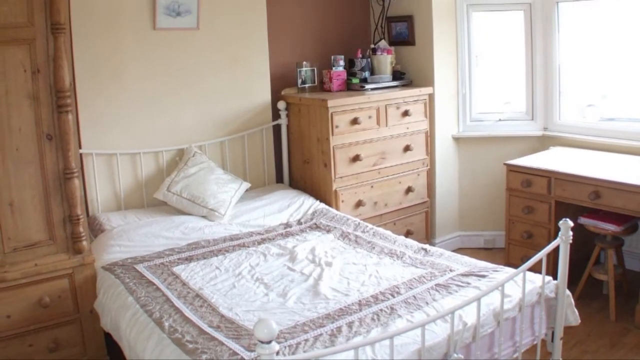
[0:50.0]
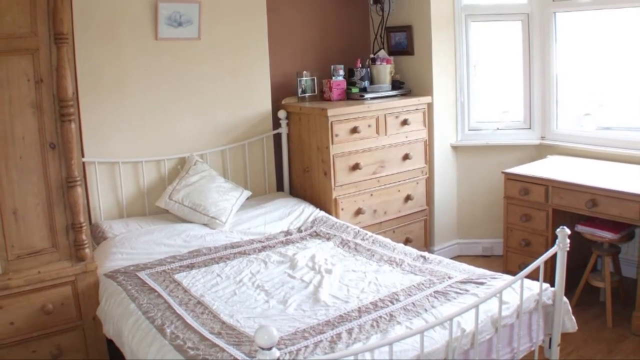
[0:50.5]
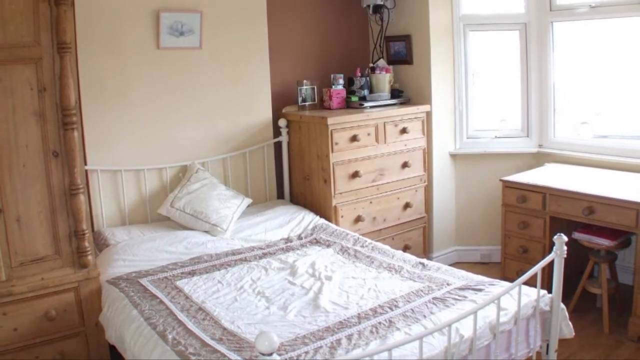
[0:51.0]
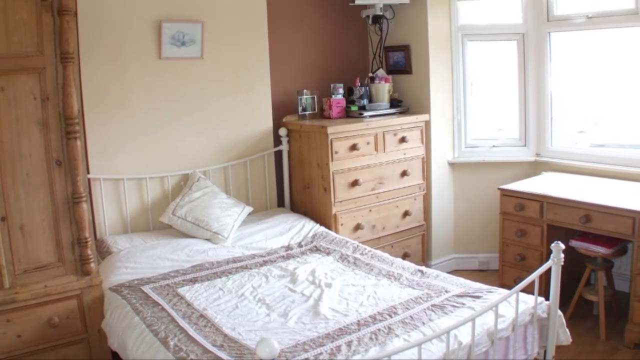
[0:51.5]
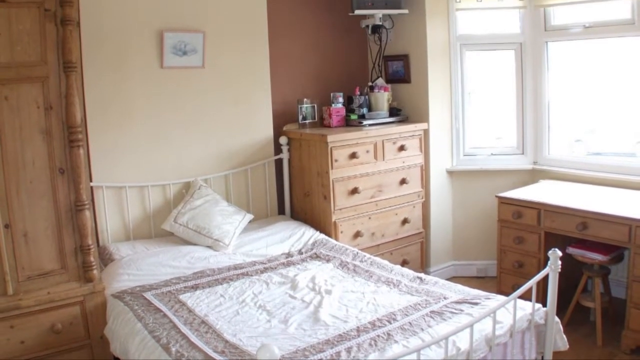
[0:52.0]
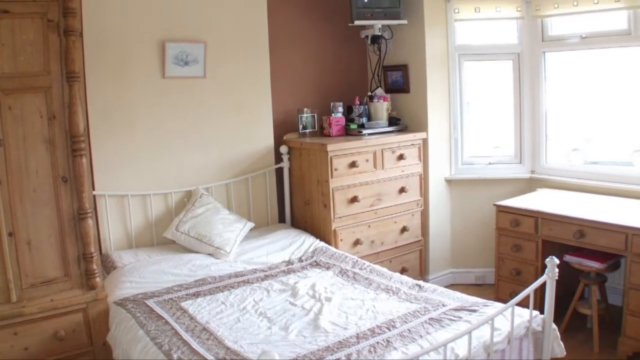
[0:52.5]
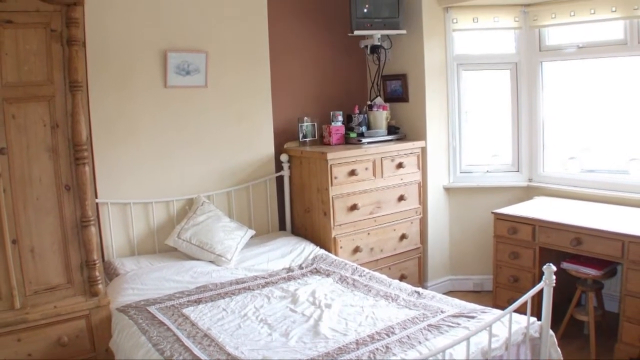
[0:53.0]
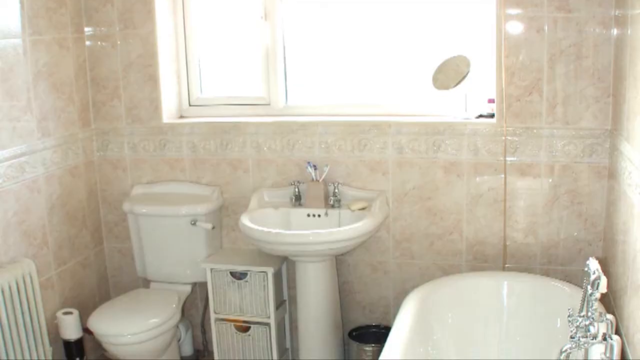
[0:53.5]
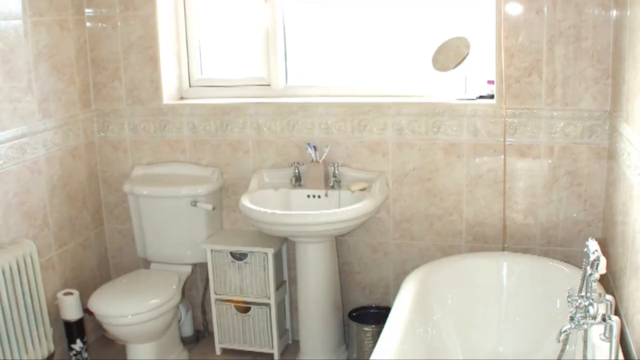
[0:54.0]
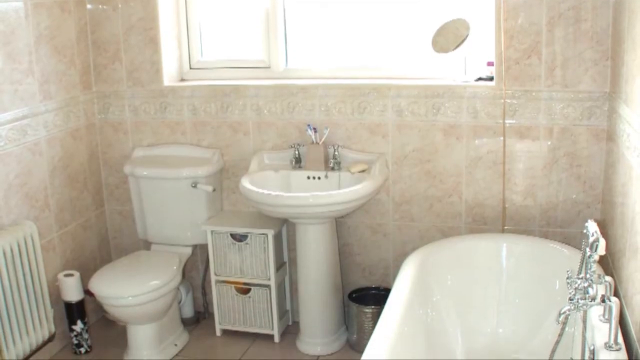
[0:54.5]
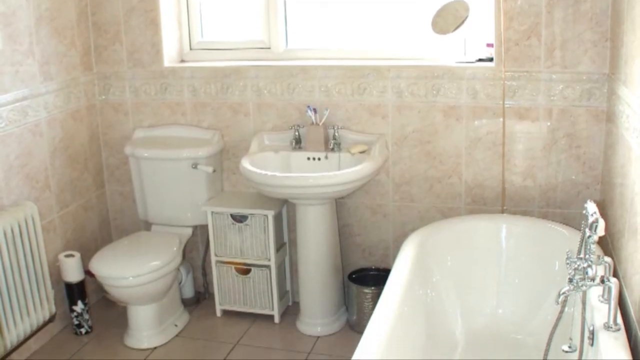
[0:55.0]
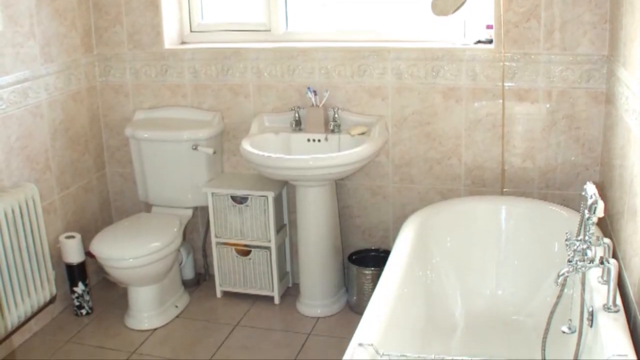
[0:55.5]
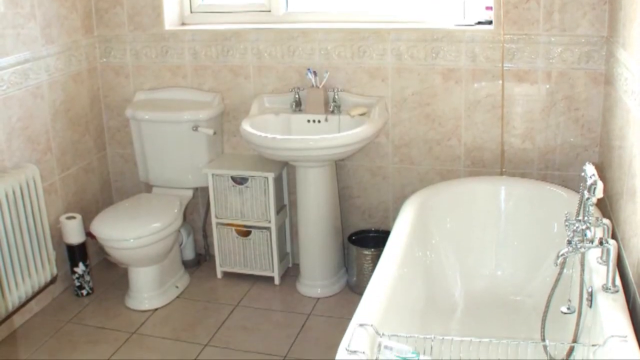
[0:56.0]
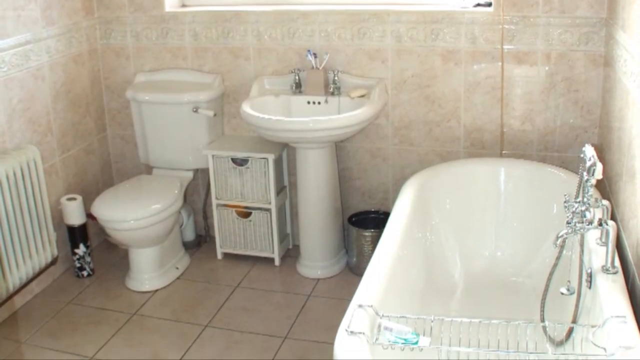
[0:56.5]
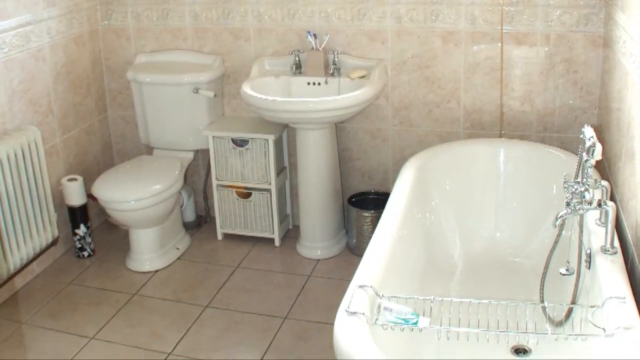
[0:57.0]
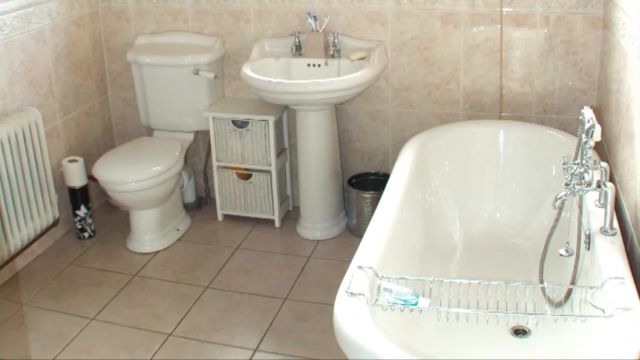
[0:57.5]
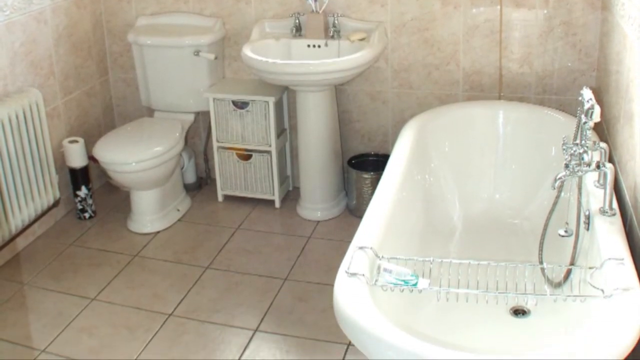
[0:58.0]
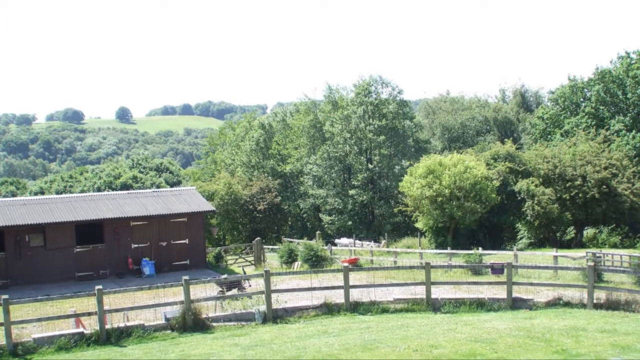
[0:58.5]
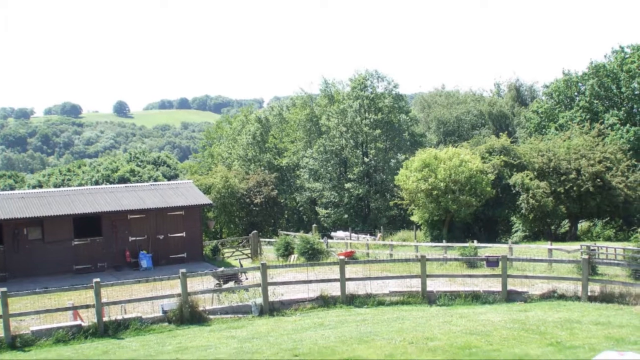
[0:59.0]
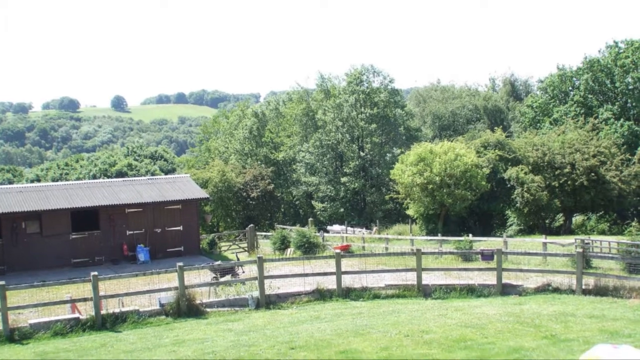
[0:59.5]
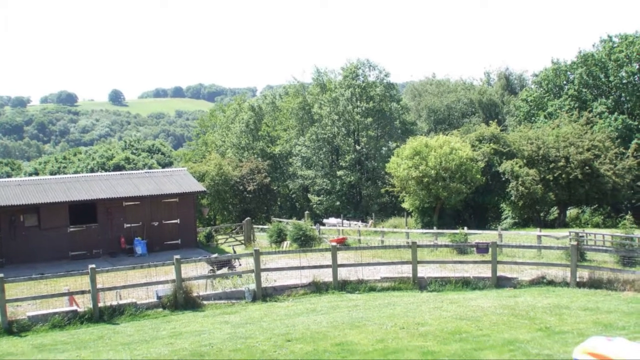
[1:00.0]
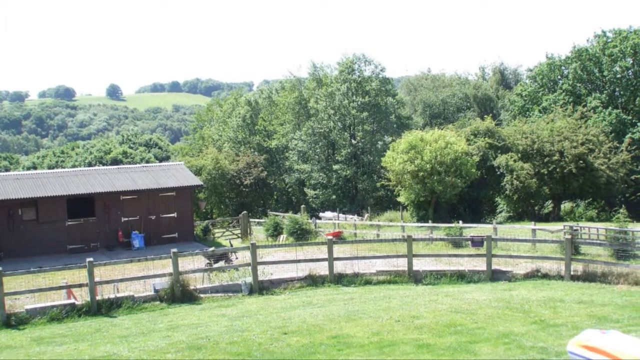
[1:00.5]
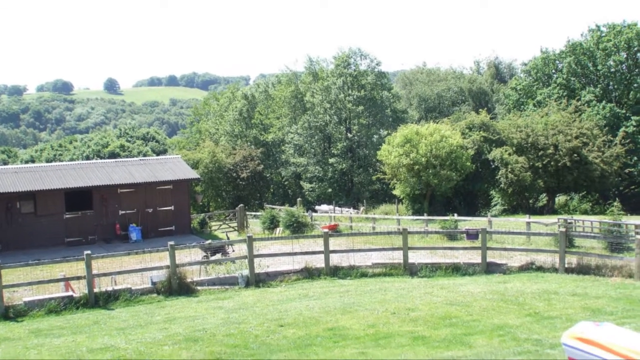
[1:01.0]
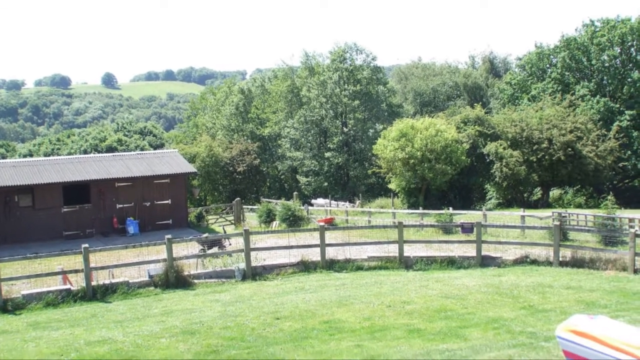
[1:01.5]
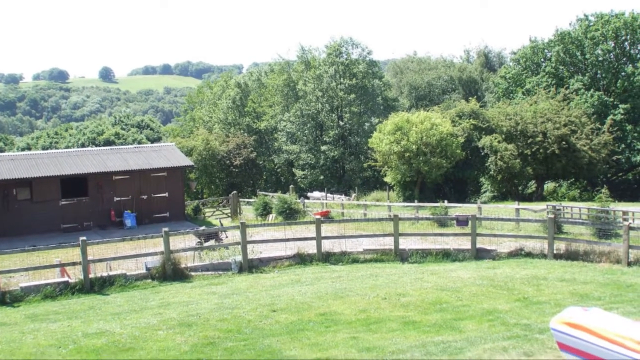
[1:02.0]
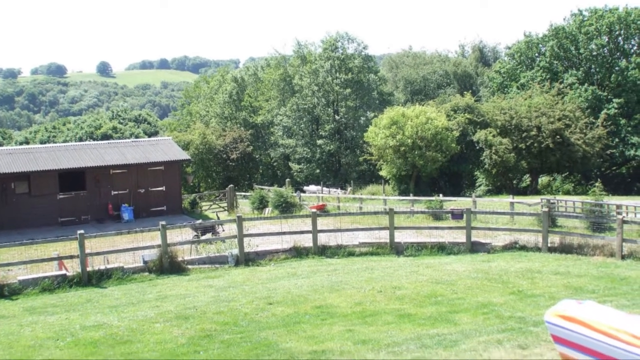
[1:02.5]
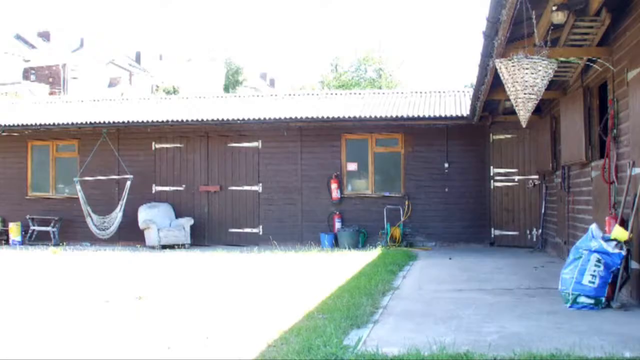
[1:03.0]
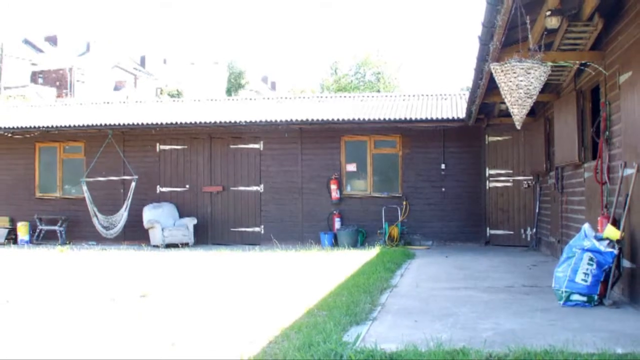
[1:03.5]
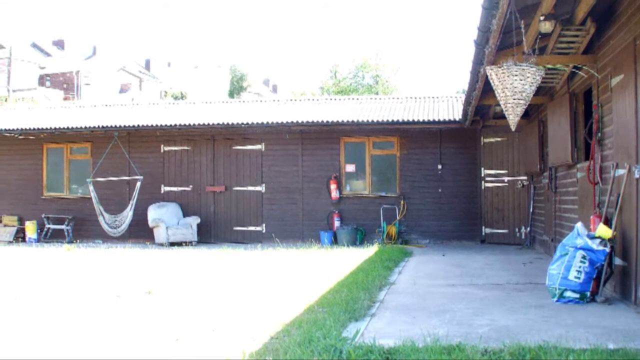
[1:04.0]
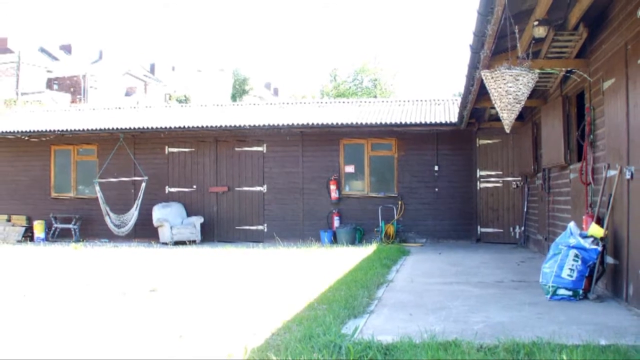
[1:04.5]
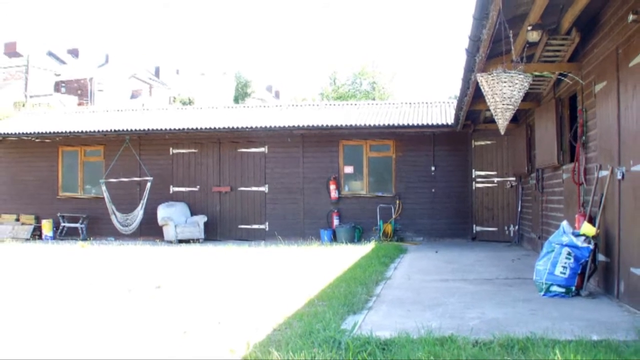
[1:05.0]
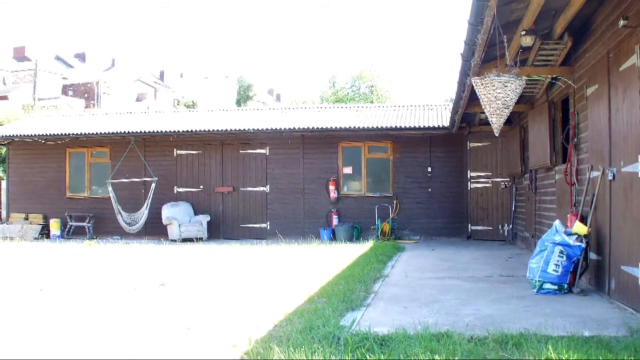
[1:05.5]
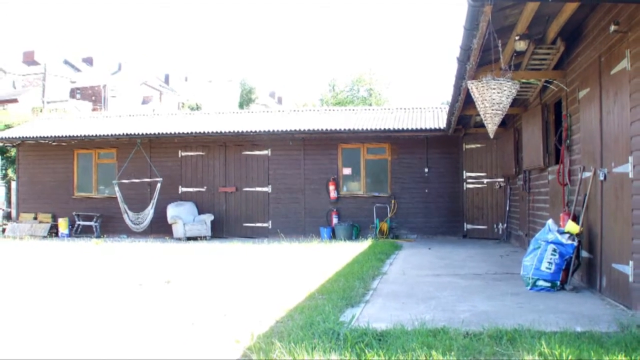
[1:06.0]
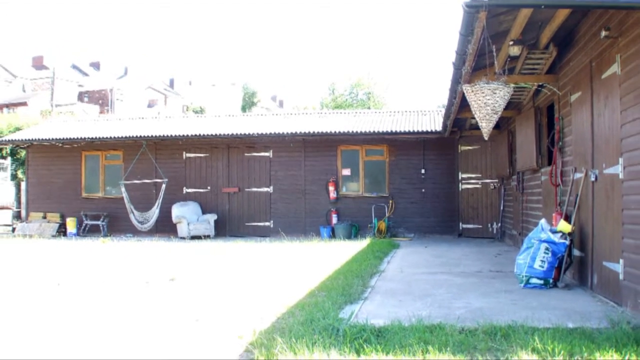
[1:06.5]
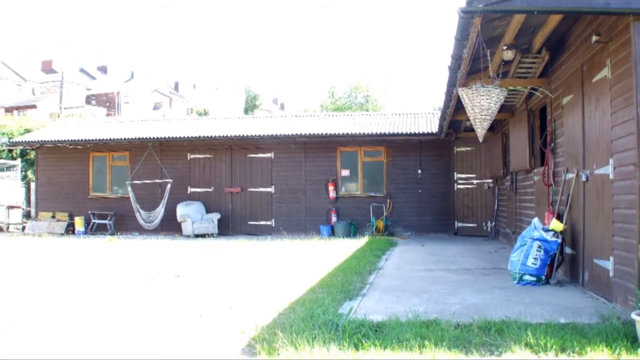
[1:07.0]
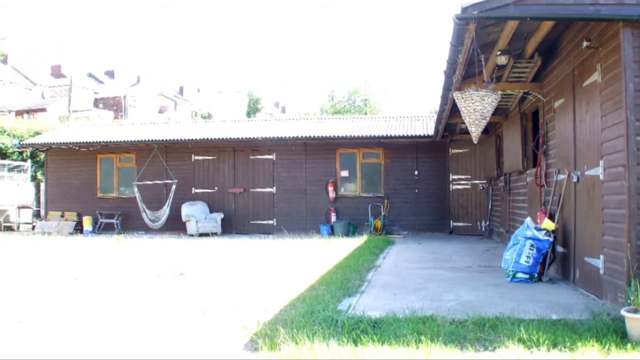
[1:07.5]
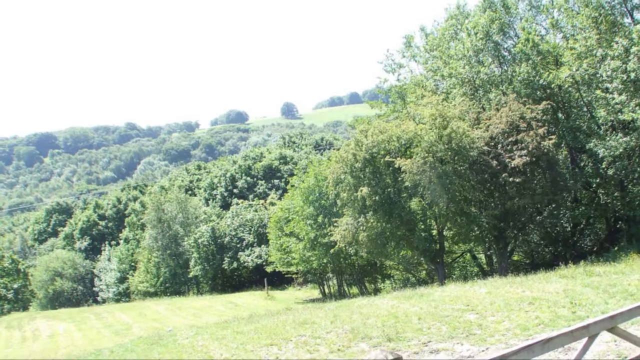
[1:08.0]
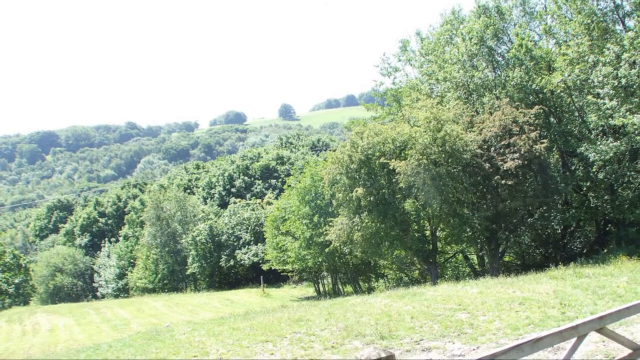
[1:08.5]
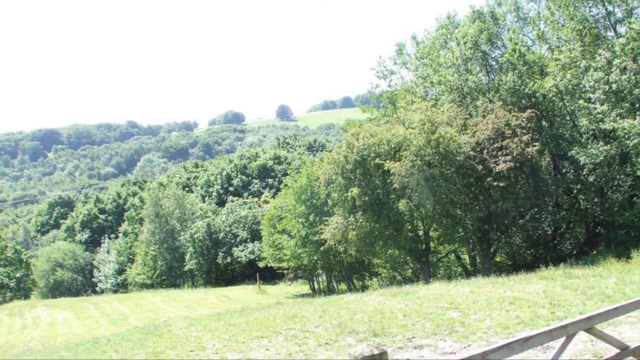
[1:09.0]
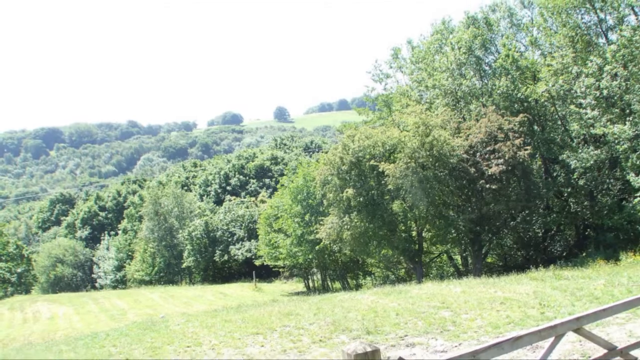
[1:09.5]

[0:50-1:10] The view starts in one of the bedrooms and also goes into the bathroom. The interior looks somewhat colonial in style. A view out over the property shows what is almost like a barn area, perhaps with stables or an oversized closed-in wood garage, though it is unclear whether this is the same house. A view of what looks like a forest area is also shown. The bedroom, the only one seen so far, is small. It appears to have a twin bed and light brown pine furniture: a bureau, a hutch and a desk. Everything is very simple and uncluttered. The dresser holds a few items, such as a candle and a little vase. The bed has a white rail headboard and footboard and a white quilted bedspread.